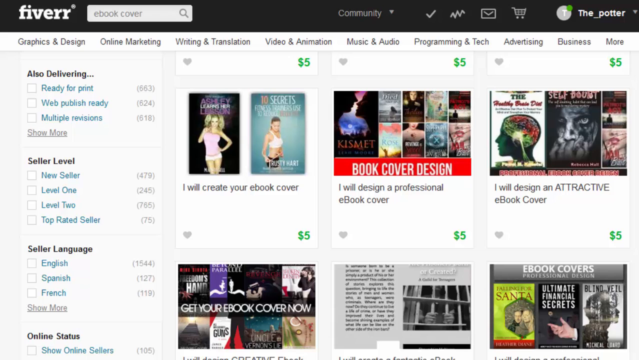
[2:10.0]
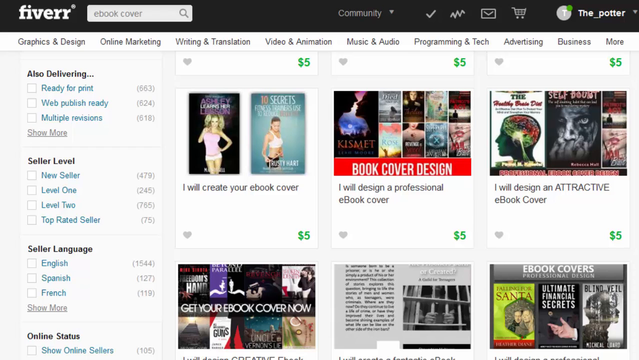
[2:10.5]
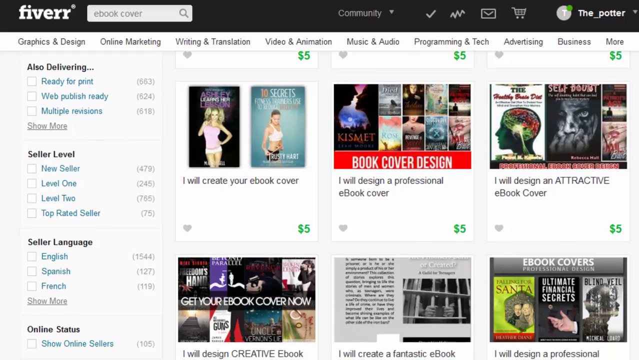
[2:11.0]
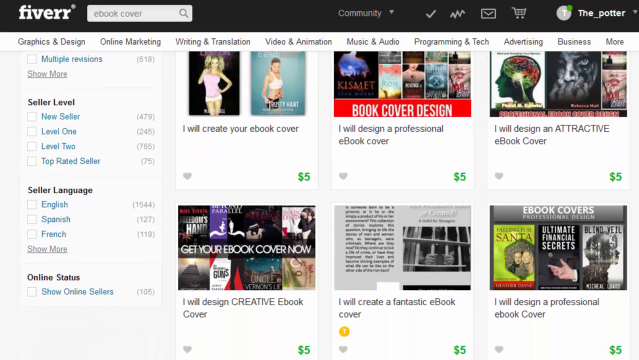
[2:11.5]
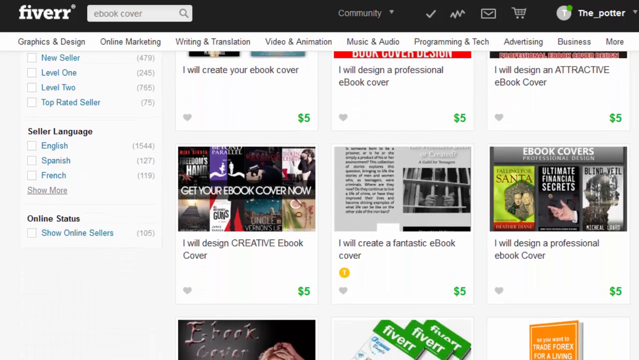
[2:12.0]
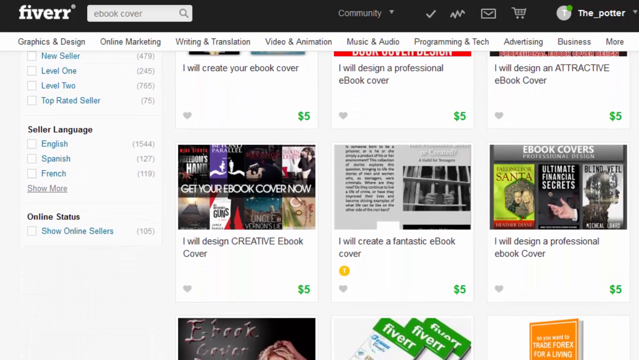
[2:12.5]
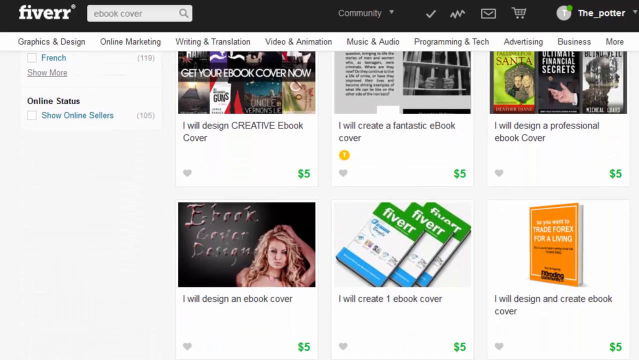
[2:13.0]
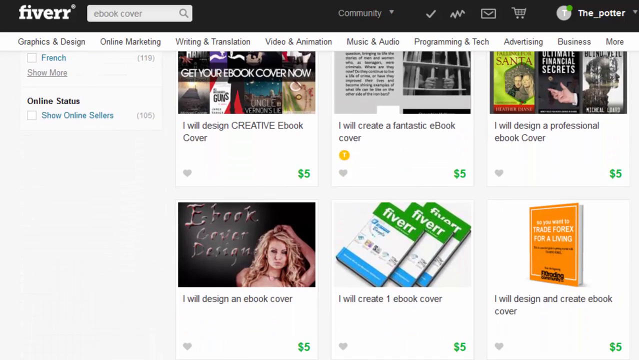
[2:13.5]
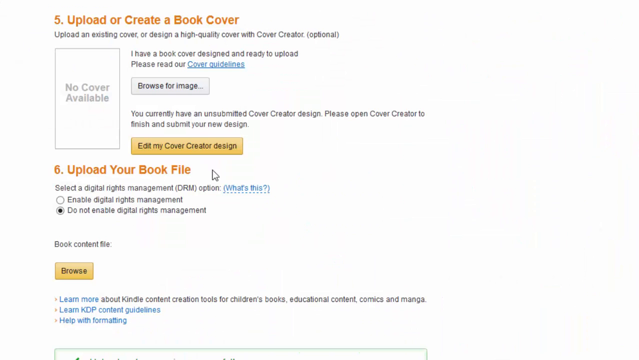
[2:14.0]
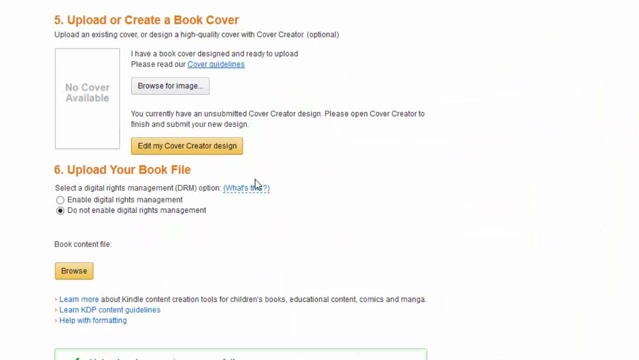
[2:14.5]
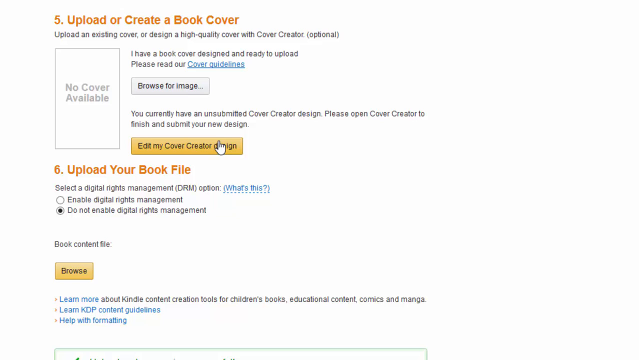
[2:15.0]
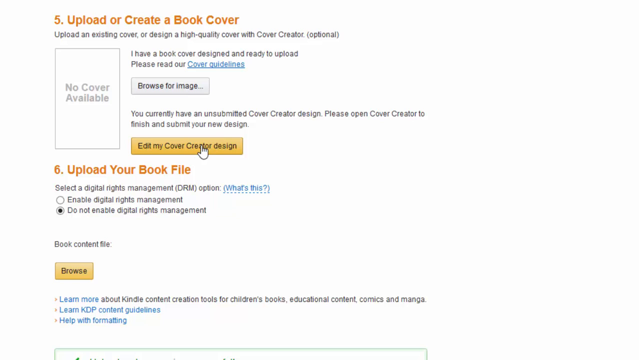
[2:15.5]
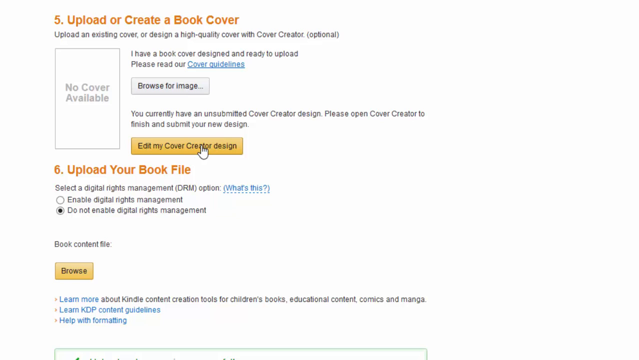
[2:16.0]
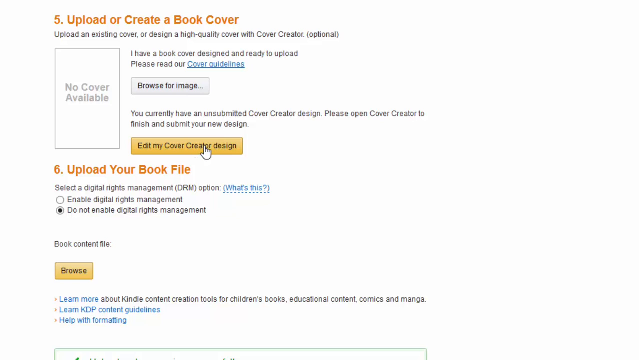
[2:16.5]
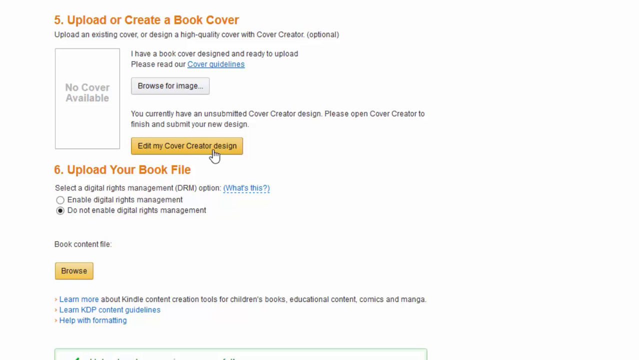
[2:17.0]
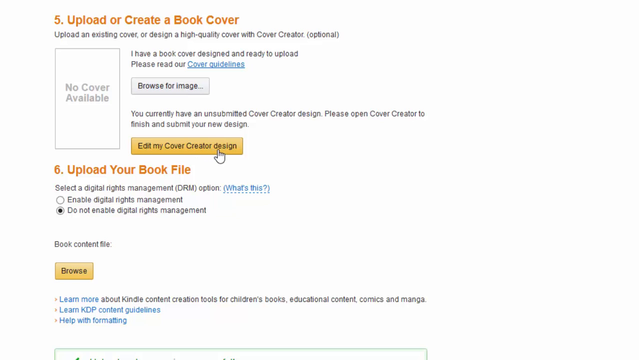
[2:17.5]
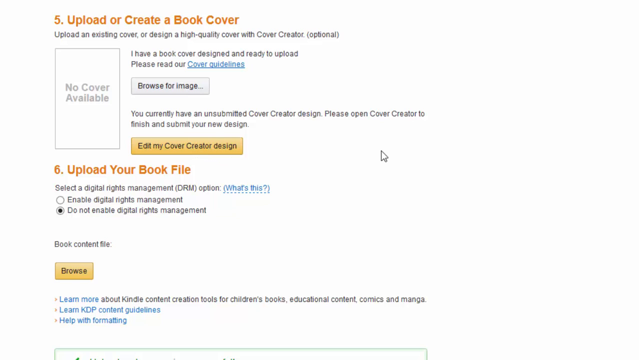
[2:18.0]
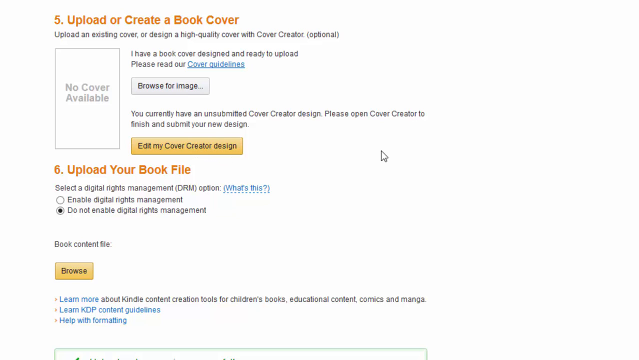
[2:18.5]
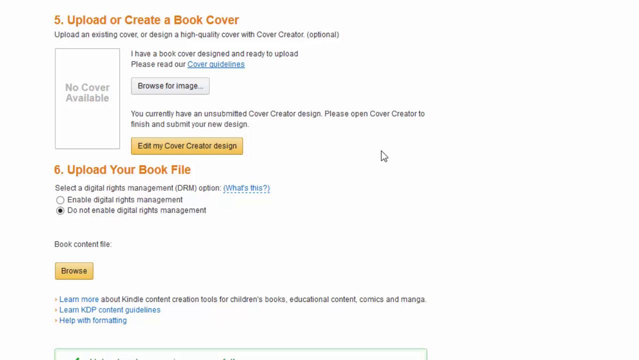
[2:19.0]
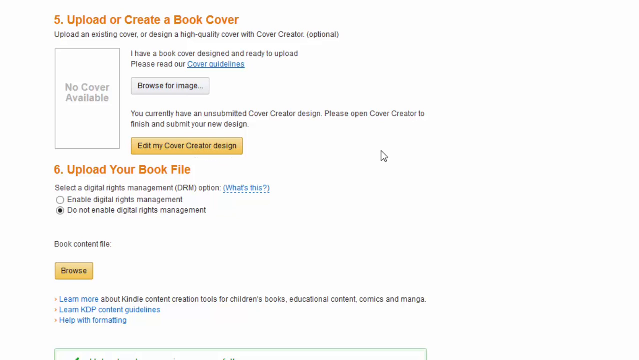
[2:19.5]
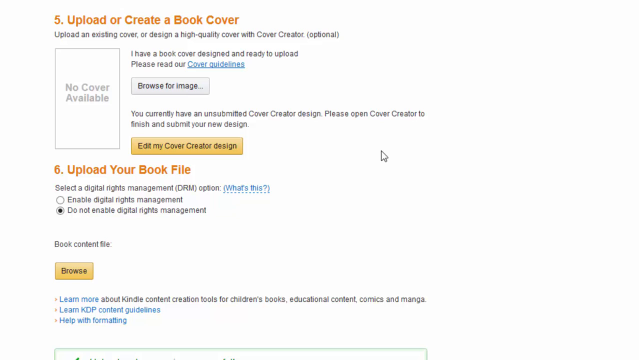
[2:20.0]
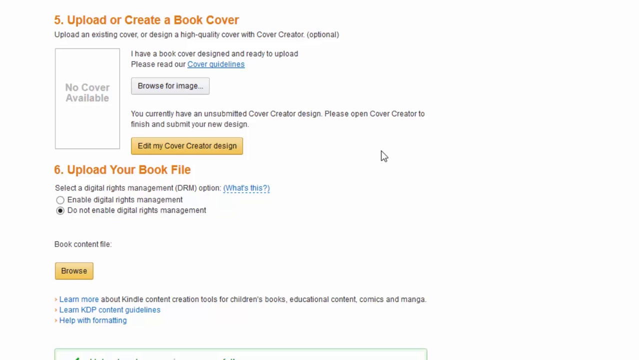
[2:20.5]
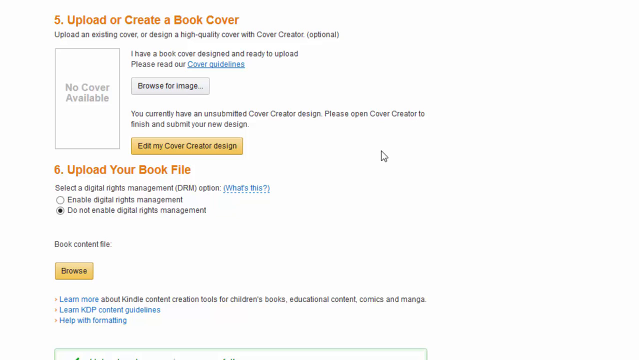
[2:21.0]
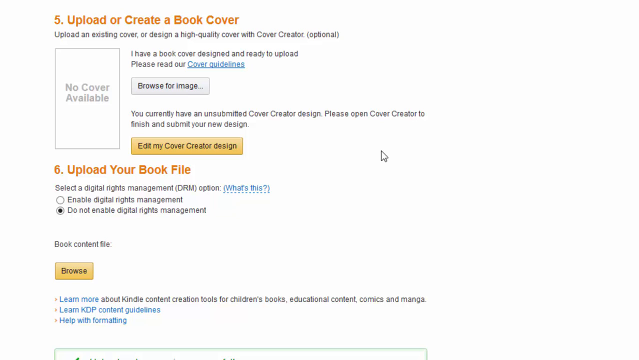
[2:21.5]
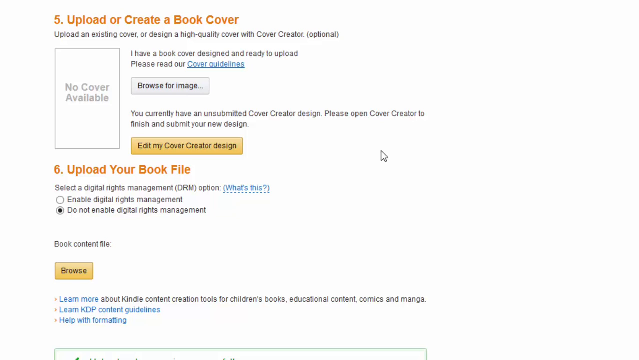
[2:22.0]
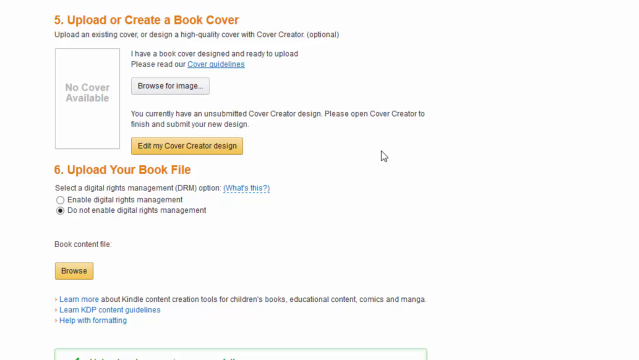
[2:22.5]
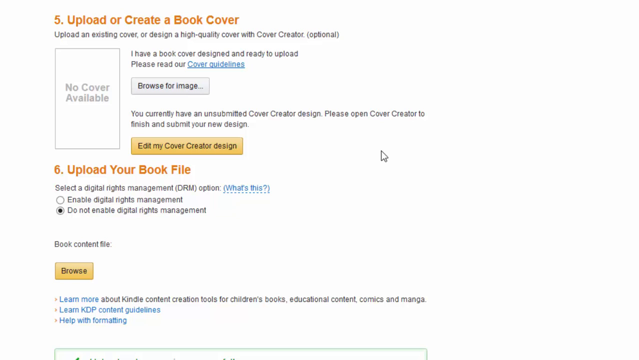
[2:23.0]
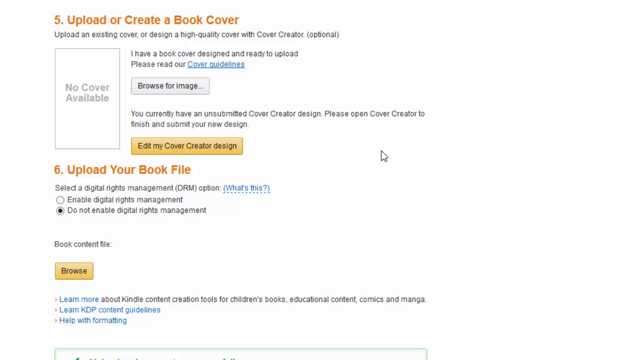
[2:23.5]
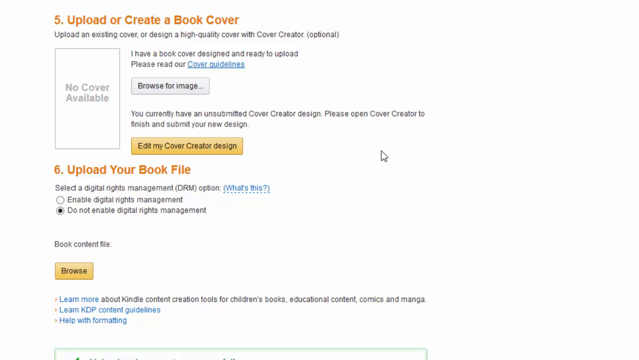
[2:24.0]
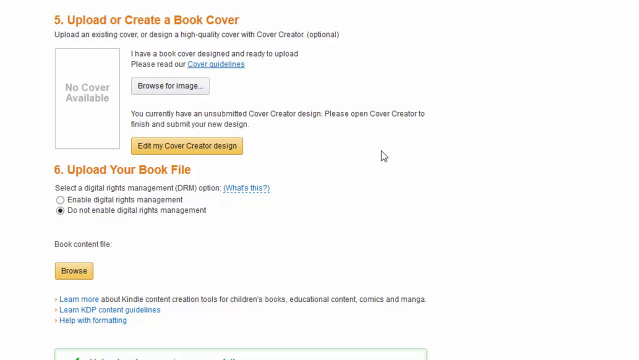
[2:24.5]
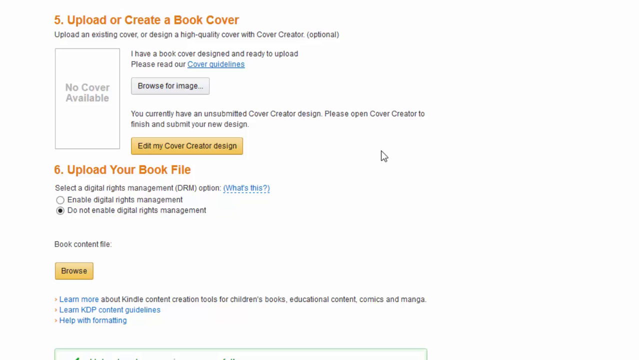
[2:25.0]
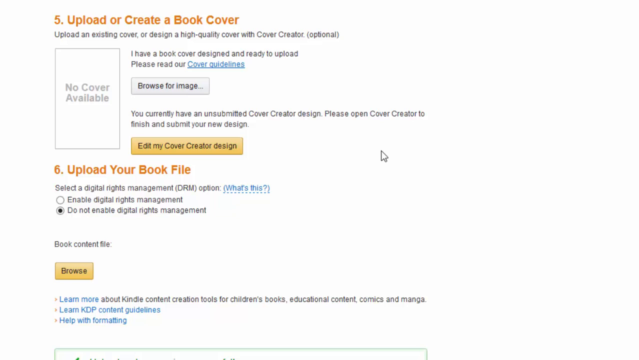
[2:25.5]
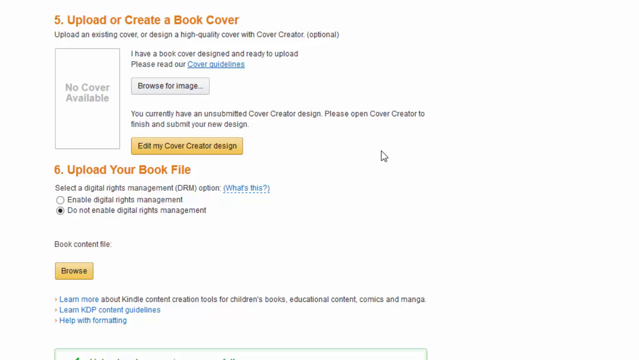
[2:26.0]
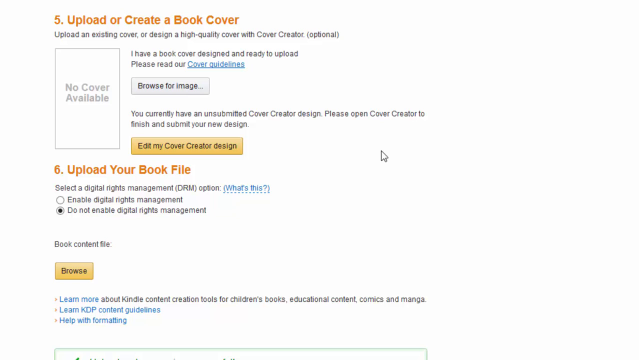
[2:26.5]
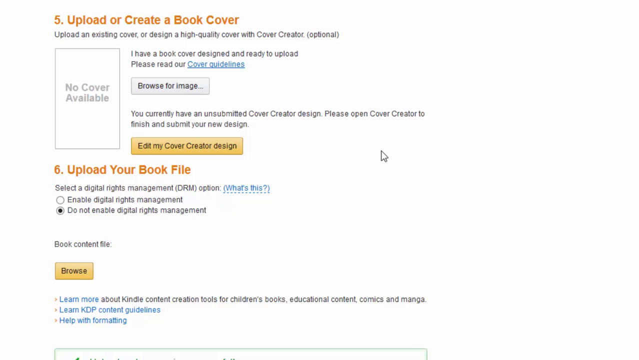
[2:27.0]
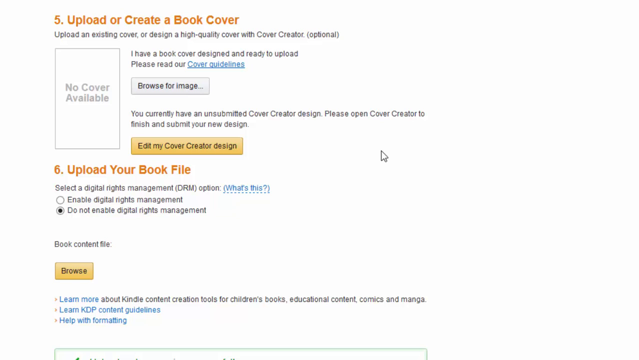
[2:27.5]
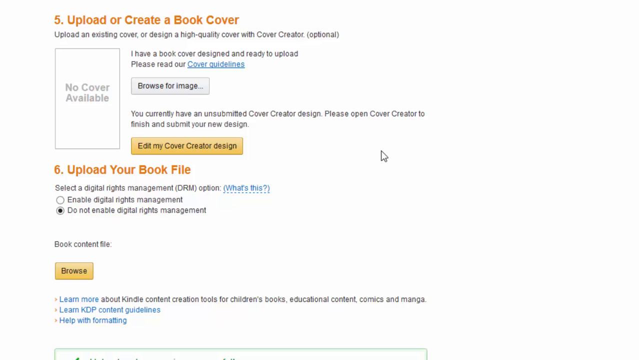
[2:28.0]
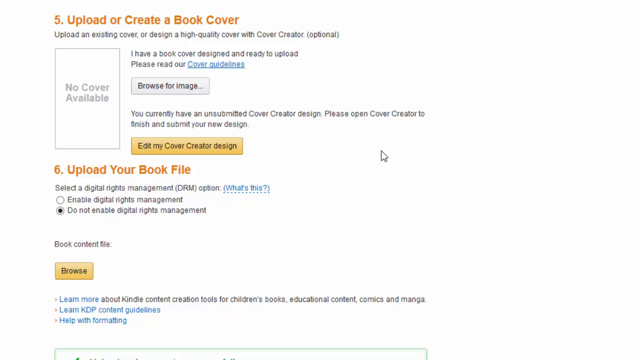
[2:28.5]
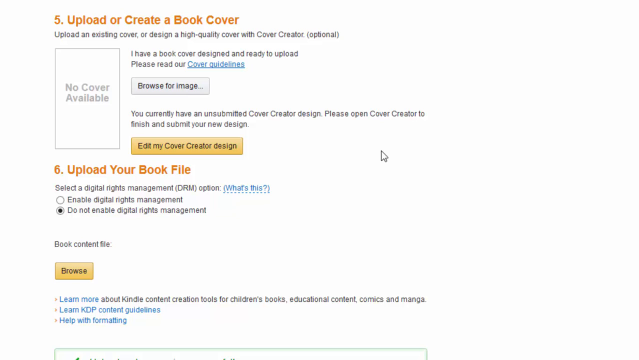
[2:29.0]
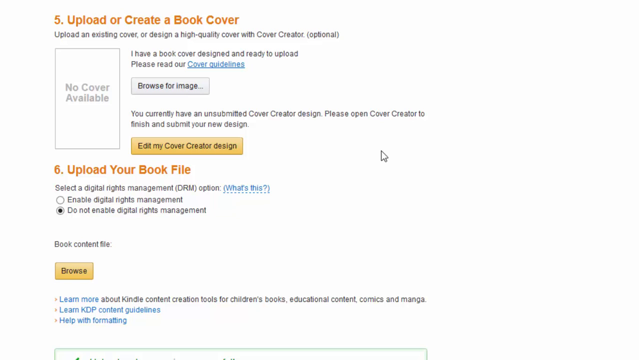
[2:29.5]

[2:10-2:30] The Fiverr page continues scrolling down through the people who create book covers. On the left is one more sort option to show only online sellers, people who are online right now. On the right the listings continue, including "I will create a fantastic e-book cover" and "I will create one e-book cover". The video then cuts again to the first text page with instructions, "upload or create a book cover". In the middle it reads "you currently have an unsubmitted cover creator design. Please open cover creator to finish and submit your new design", with an orange button reading "edit my cover creator design". The pointer moves across and hovers over that button, turning into a pointer finger, then moves off to the side and stops in the middle of the page, where it stays with nothing else happening.